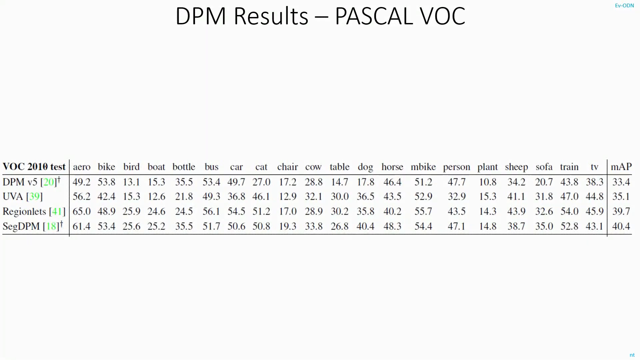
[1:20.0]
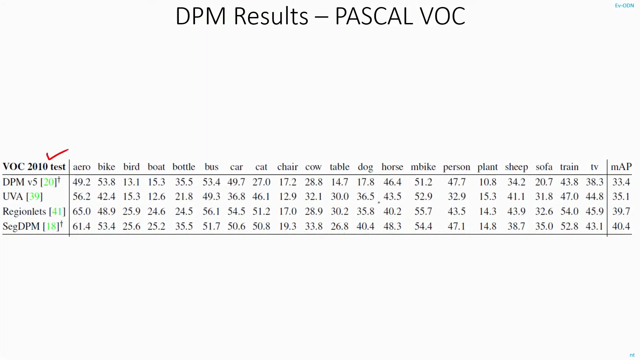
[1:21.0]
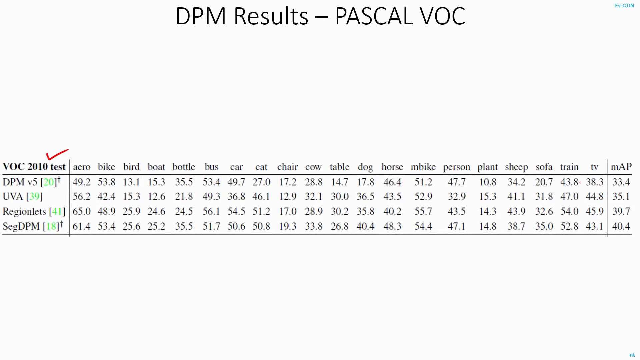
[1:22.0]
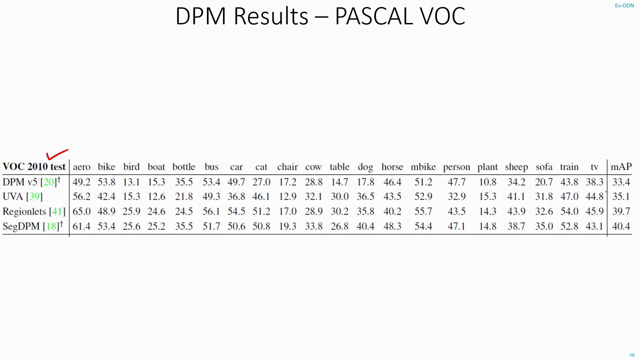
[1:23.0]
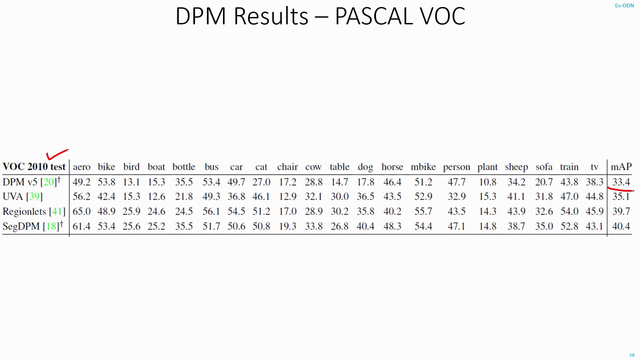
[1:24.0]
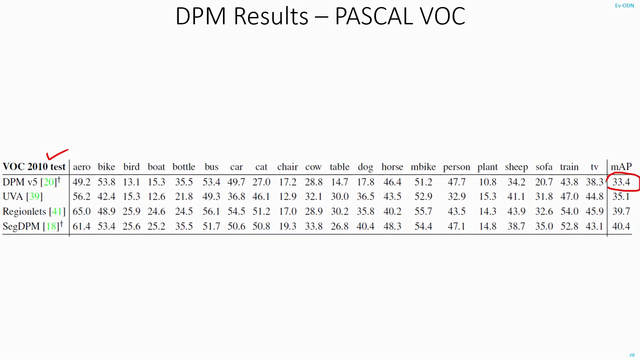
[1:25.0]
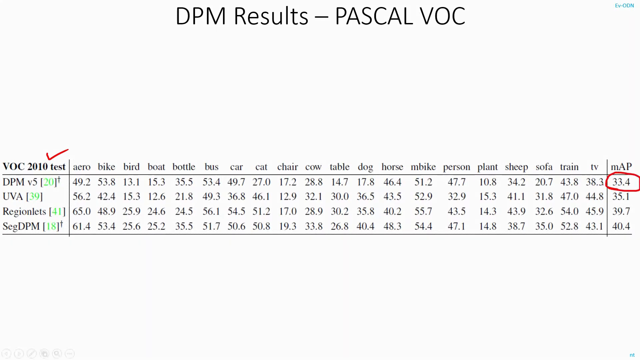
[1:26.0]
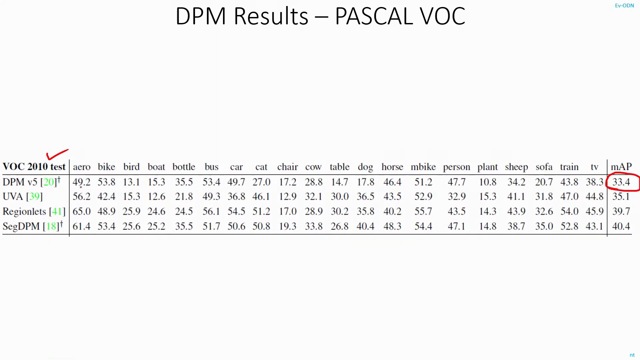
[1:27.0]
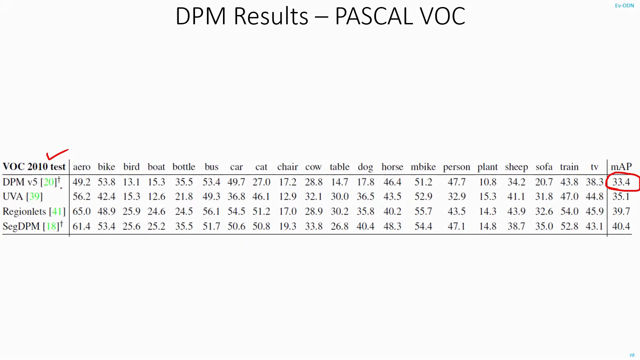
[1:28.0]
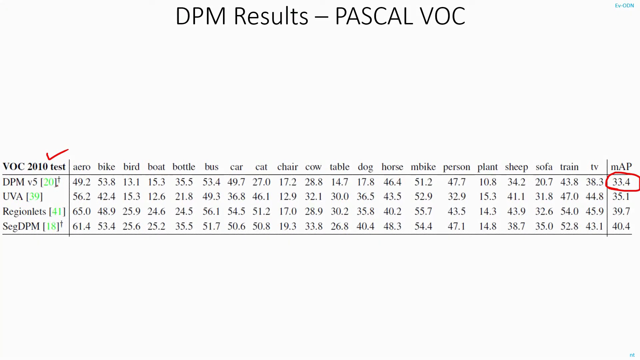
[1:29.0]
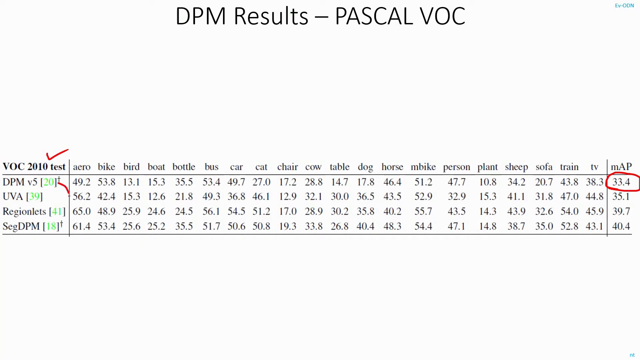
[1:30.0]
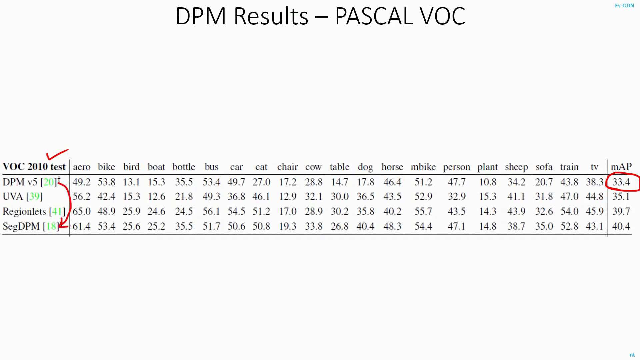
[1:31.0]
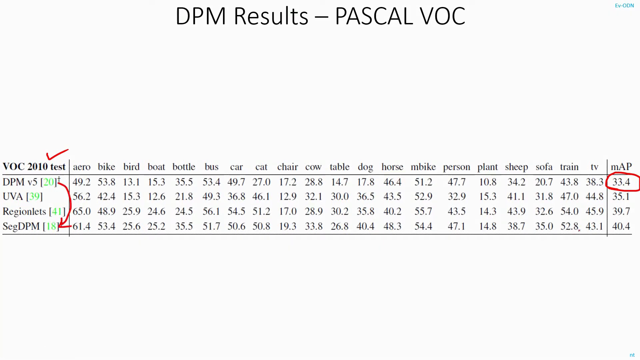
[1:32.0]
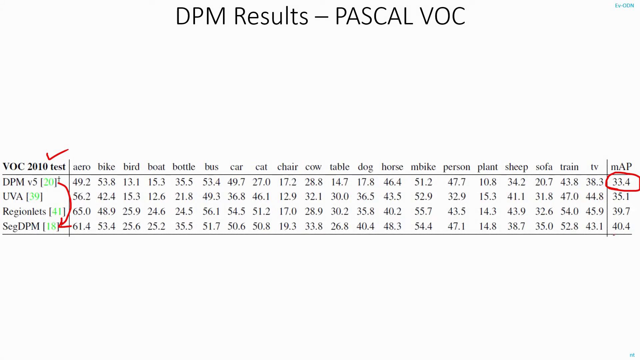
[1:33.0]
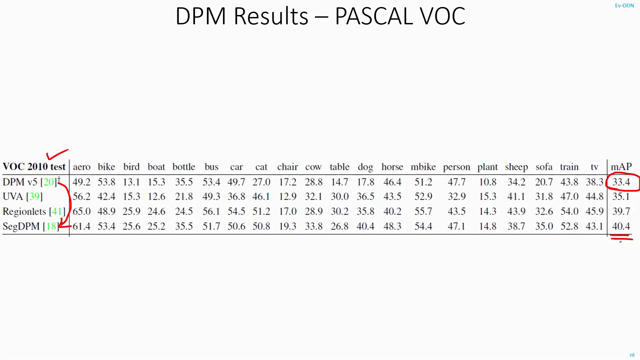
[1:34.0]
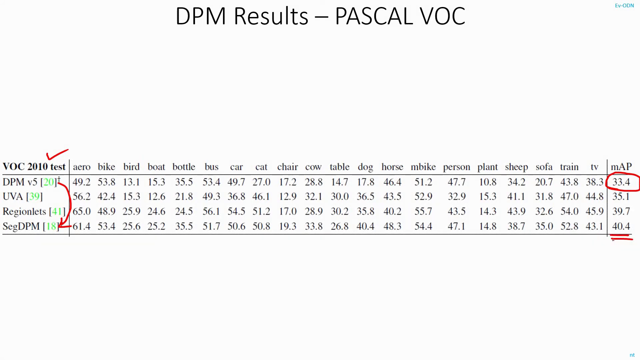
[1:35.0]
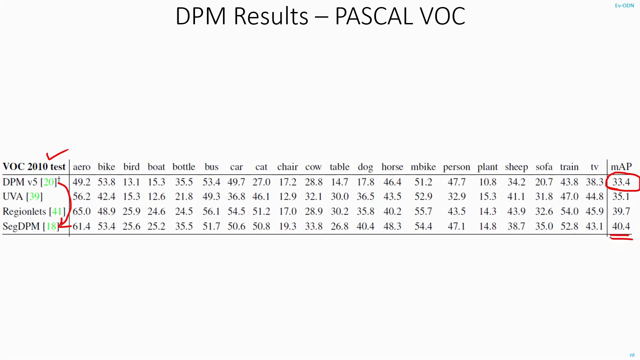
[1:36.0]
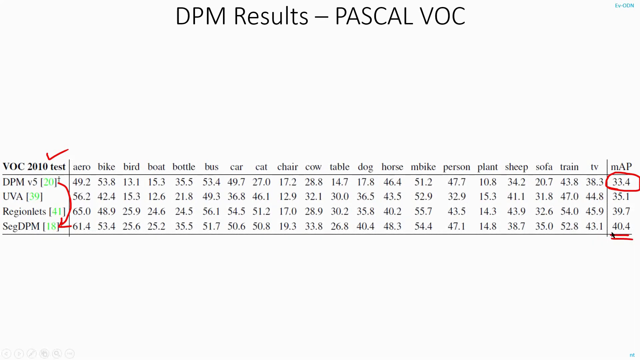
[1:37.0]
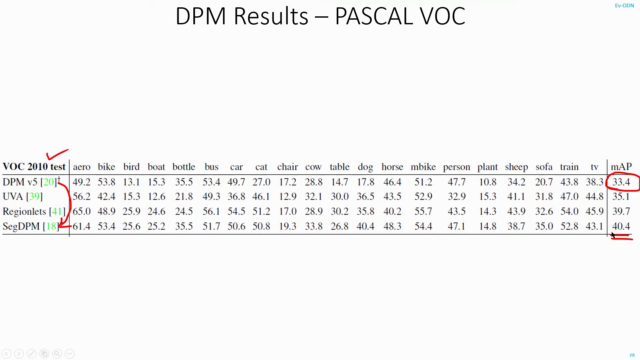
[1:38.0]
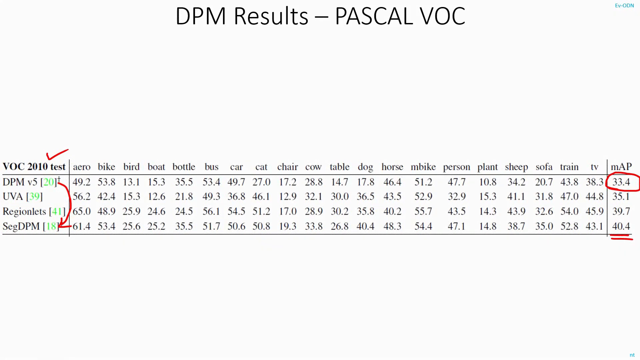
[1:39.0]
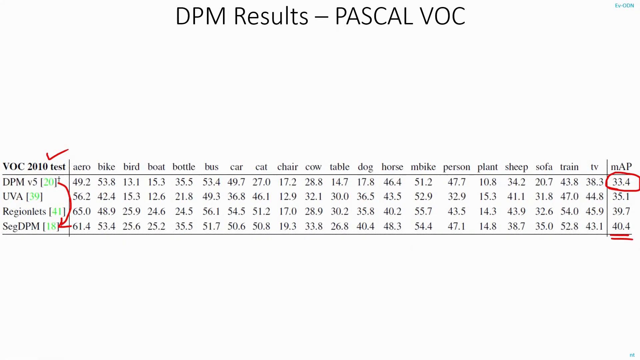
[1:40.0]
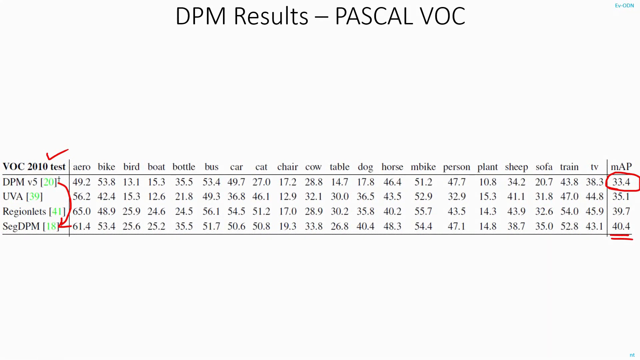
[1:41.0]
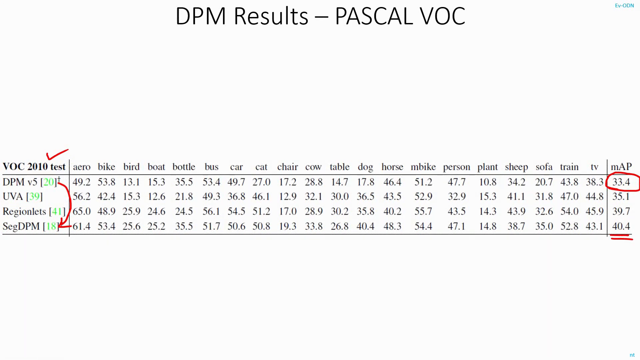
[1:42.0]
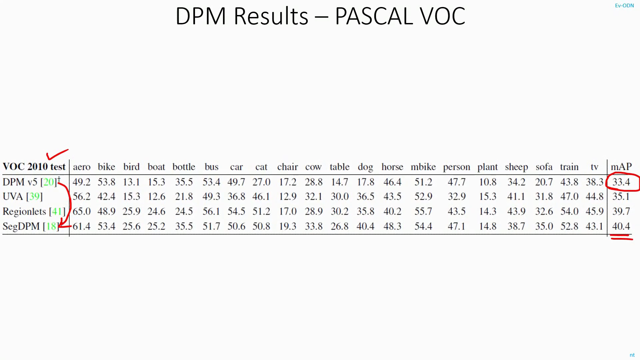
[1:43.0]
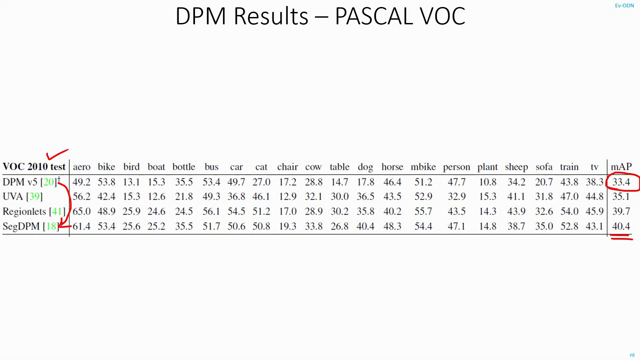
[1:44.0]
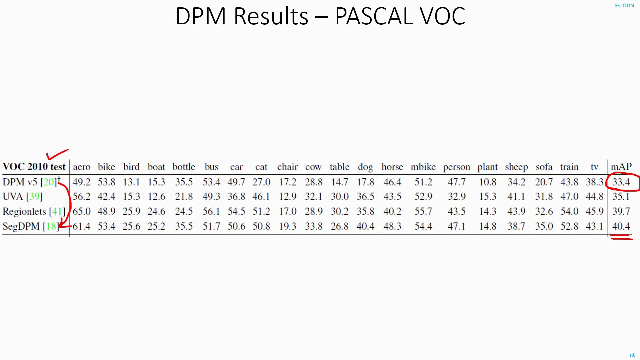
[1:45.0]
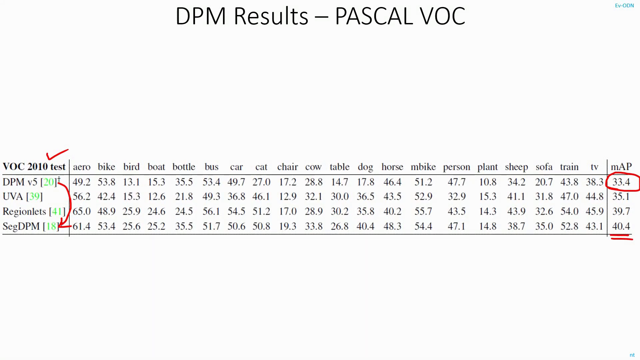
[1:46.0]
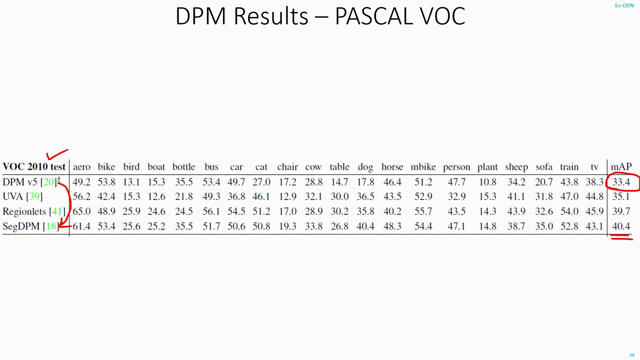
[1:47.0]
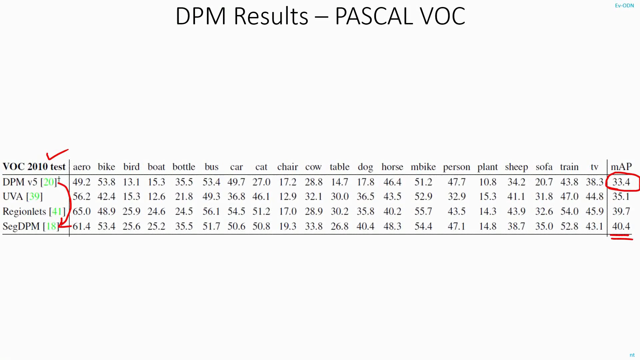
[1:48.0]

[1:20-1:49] On a white background with black text, the top reads "DPM Results - PASCAL VOC", followed by a good amount of white space. Below is something almost like part of an Excel spreadsheet, though not all the cells have lines: a whole grid of numbers. The mouse cursor moves over text reading "2010 test", and a red check mark appears, almost as if drawn by the little cursor or pen tip. Then someone, with no visible pen, circles the last number on the top row, 33.4, in red; it looks freehand because it is a little messy. The unseen pen then moves to the right. There are four words in a row at the beginning of each line, and an arrow is drawn from the first one down to the bottom one, with the arrowhead pointing at the bottom. Finally, two small red lines are drawn on the very last line, all the way to the right, under the last number, 40.4.